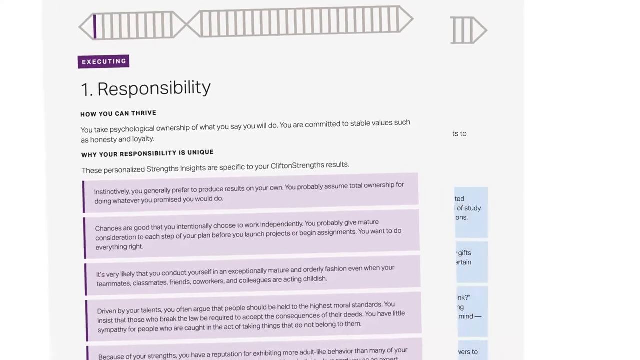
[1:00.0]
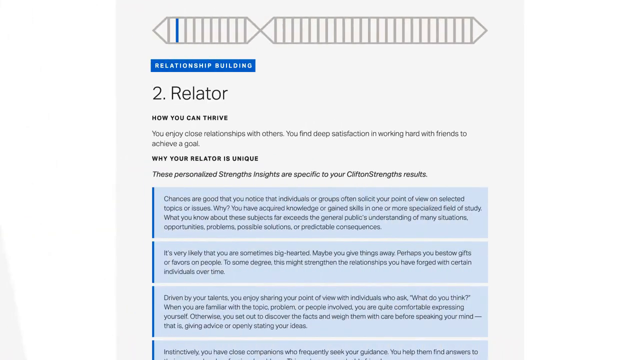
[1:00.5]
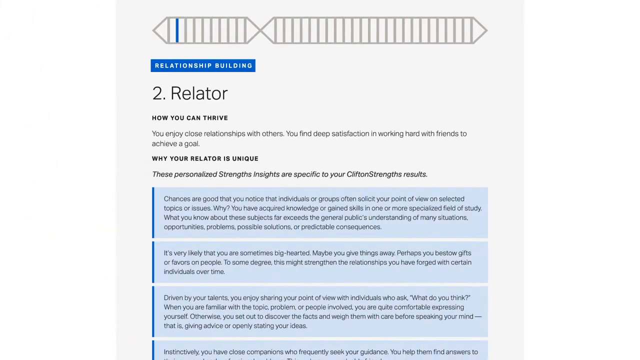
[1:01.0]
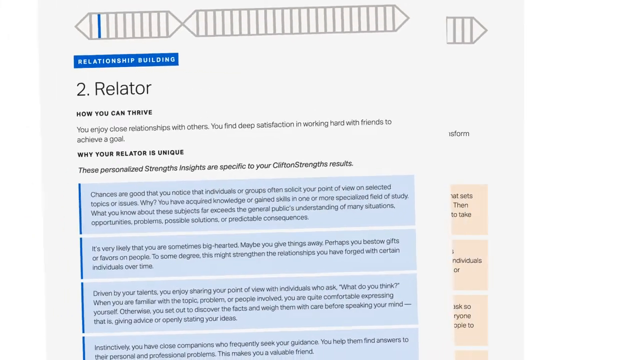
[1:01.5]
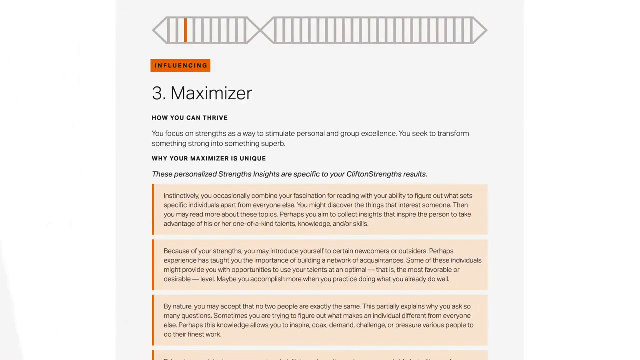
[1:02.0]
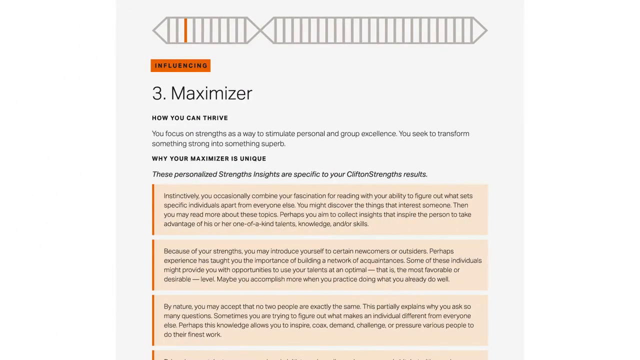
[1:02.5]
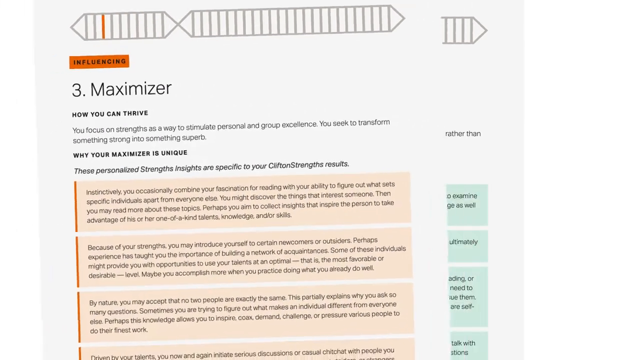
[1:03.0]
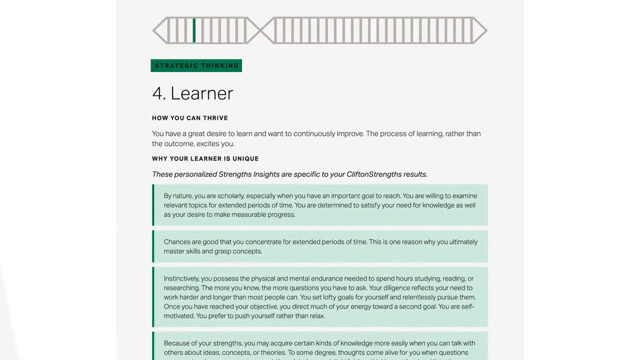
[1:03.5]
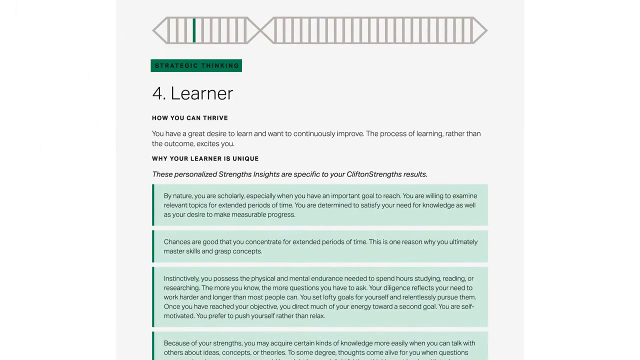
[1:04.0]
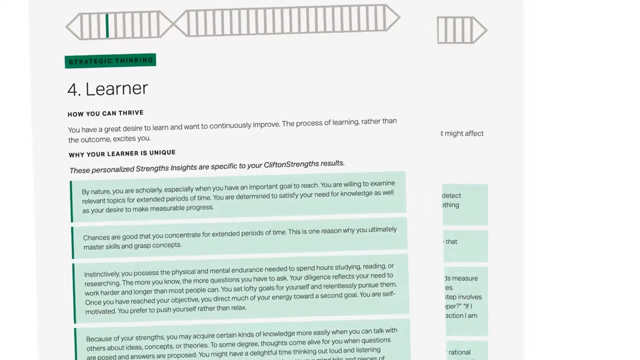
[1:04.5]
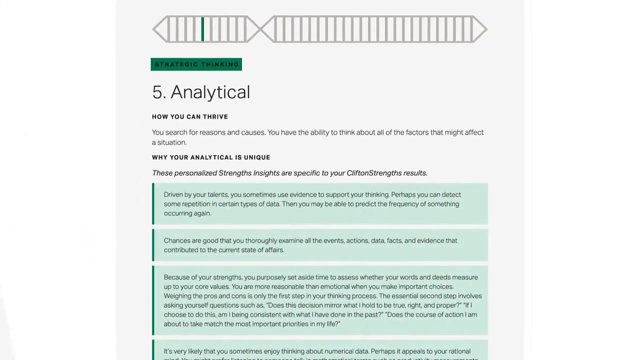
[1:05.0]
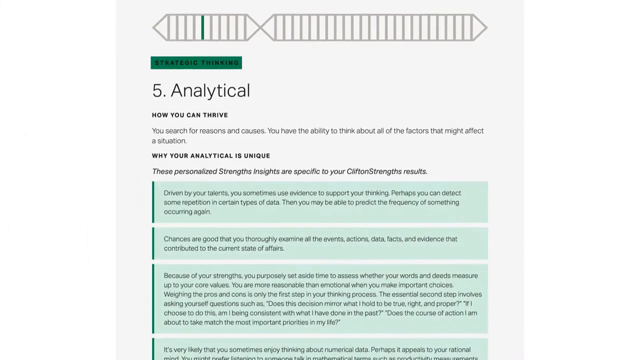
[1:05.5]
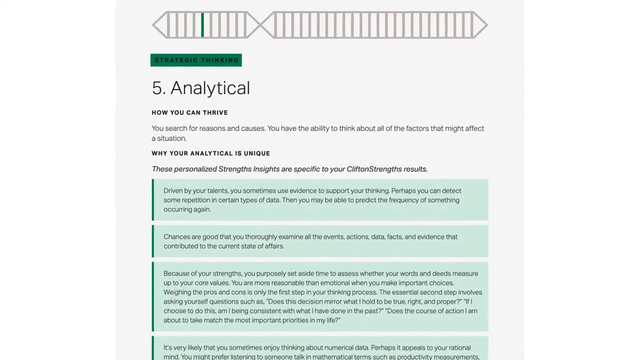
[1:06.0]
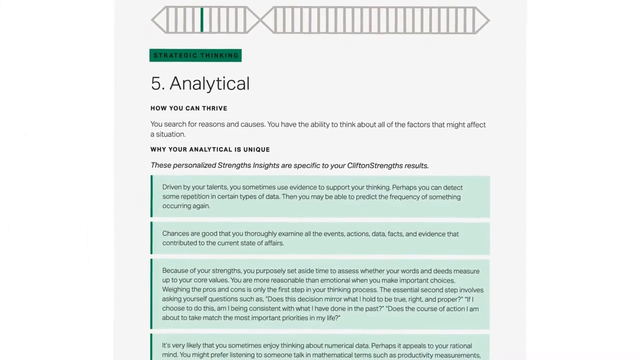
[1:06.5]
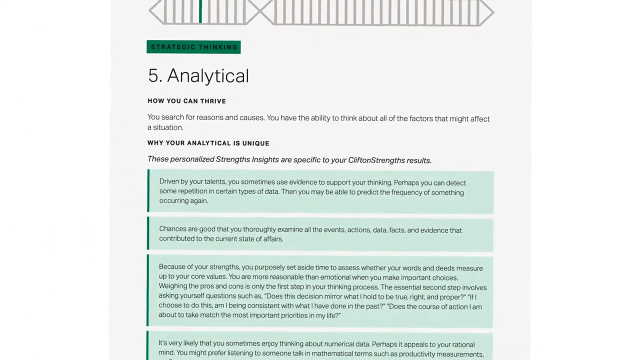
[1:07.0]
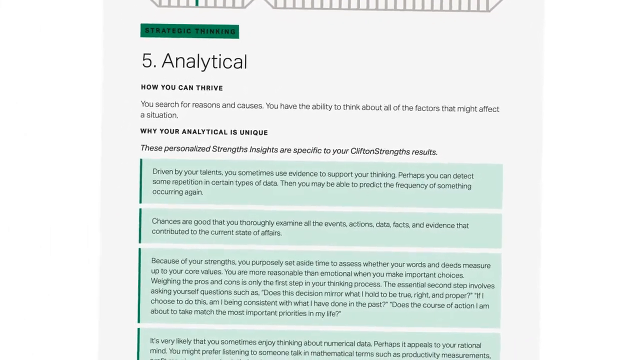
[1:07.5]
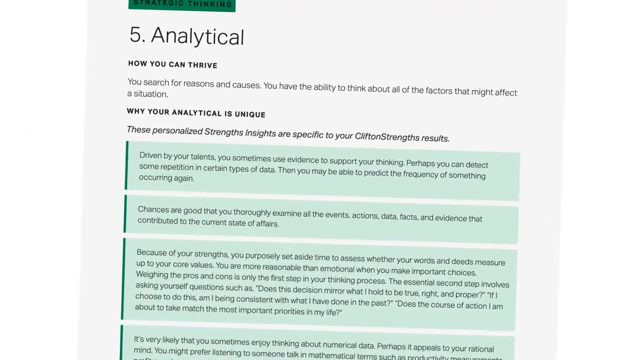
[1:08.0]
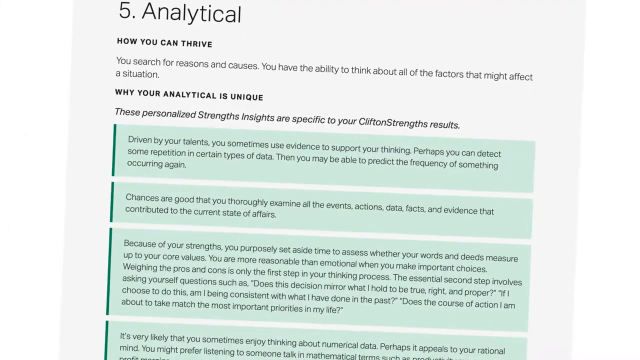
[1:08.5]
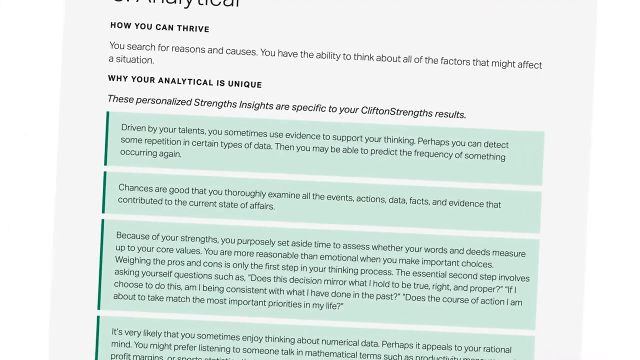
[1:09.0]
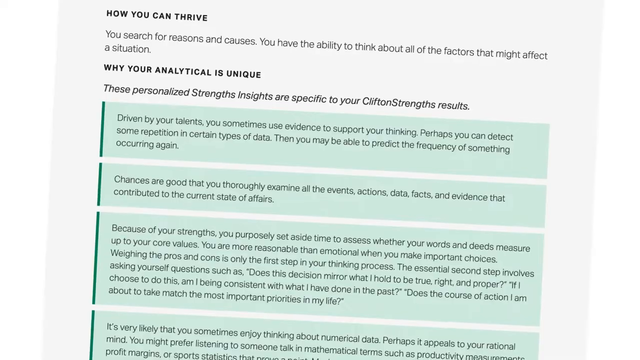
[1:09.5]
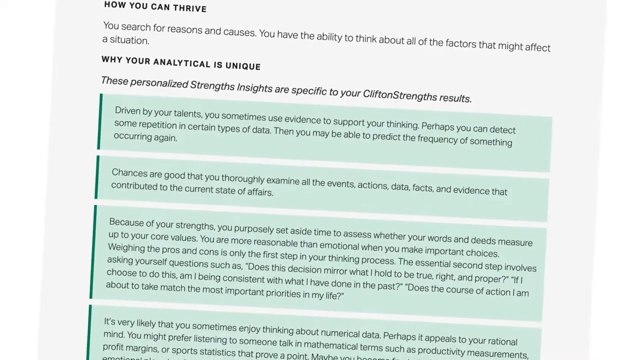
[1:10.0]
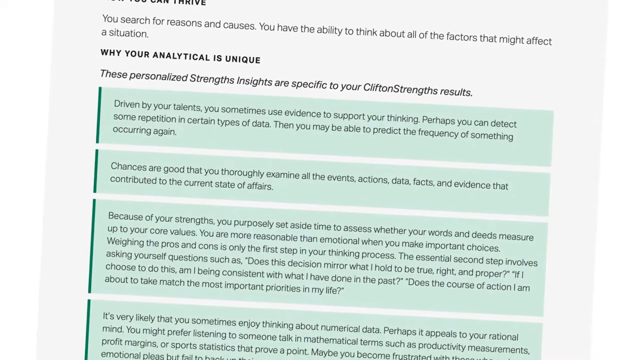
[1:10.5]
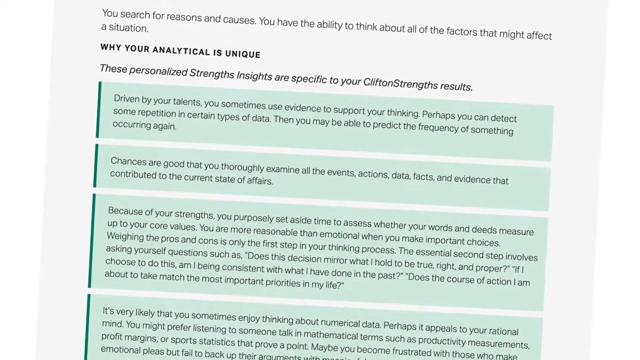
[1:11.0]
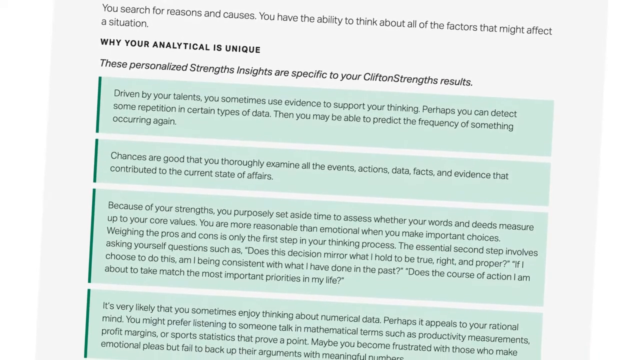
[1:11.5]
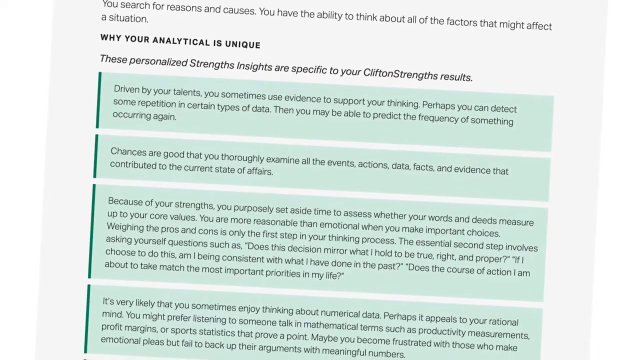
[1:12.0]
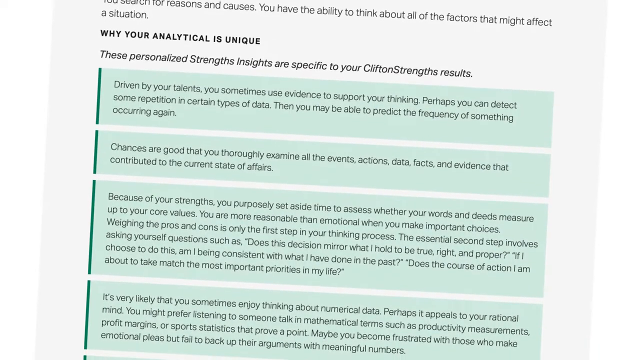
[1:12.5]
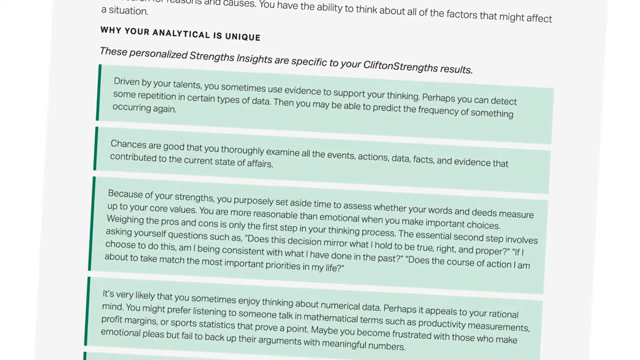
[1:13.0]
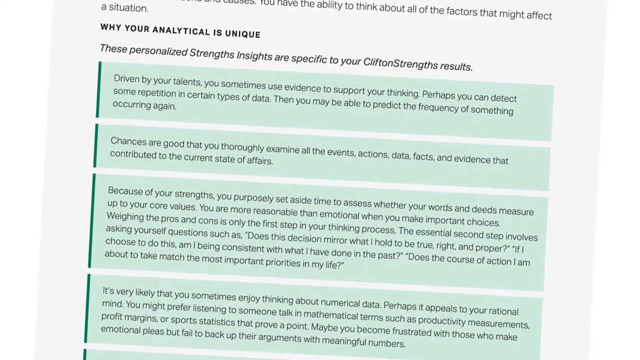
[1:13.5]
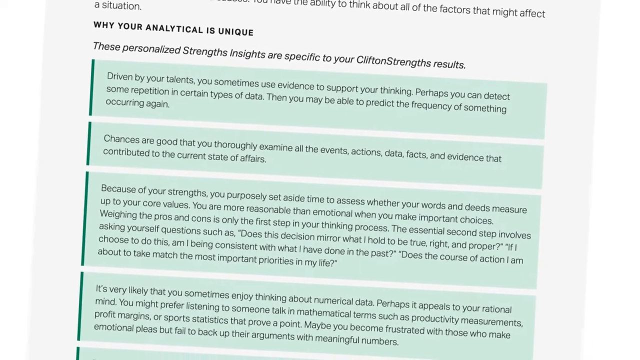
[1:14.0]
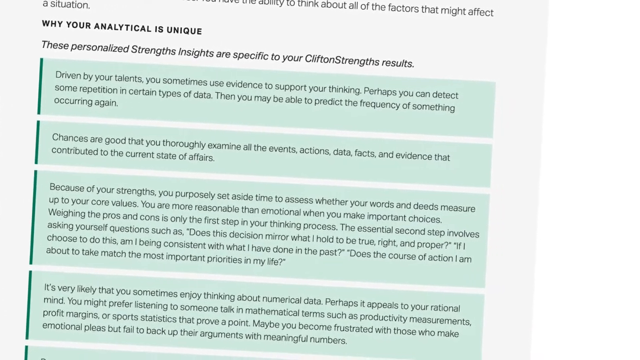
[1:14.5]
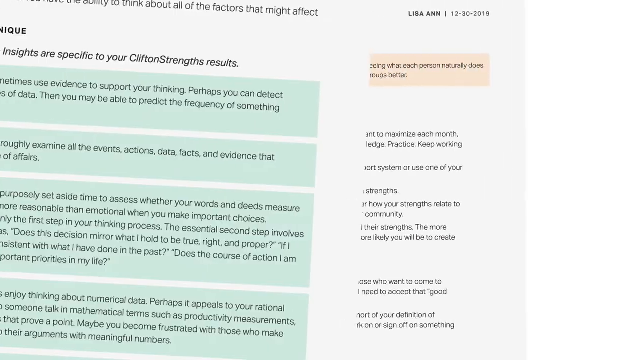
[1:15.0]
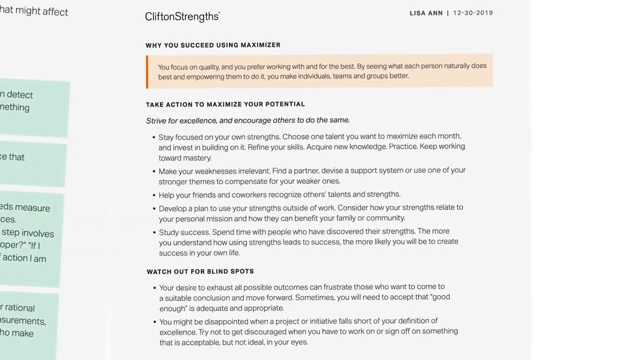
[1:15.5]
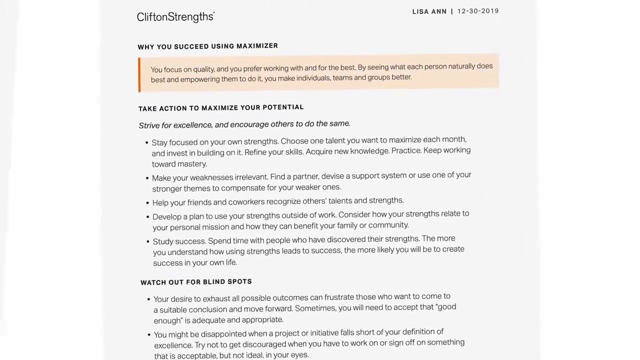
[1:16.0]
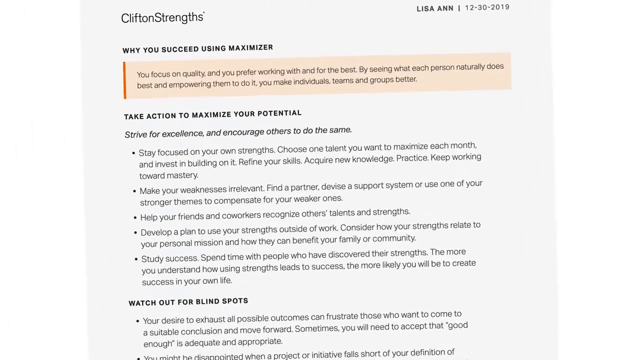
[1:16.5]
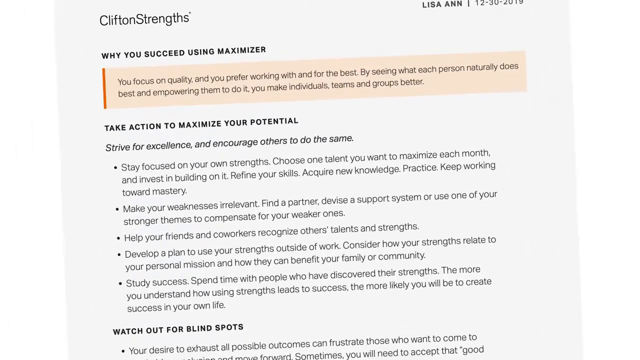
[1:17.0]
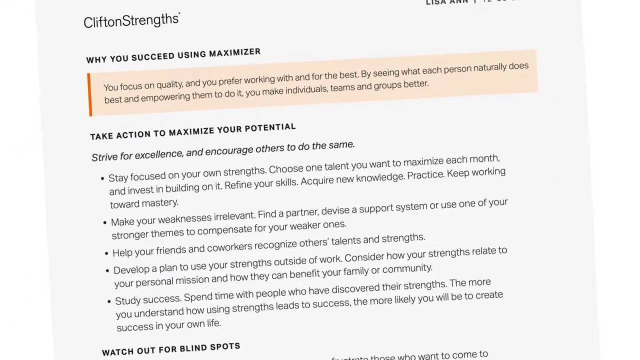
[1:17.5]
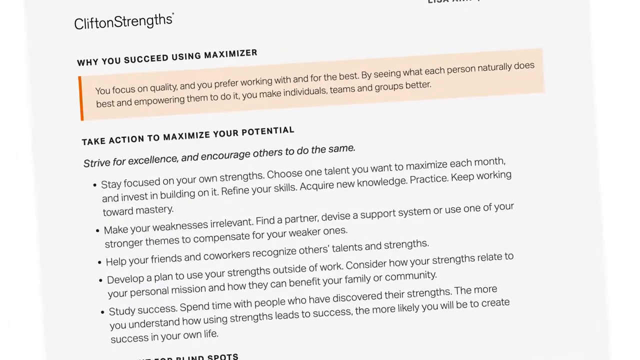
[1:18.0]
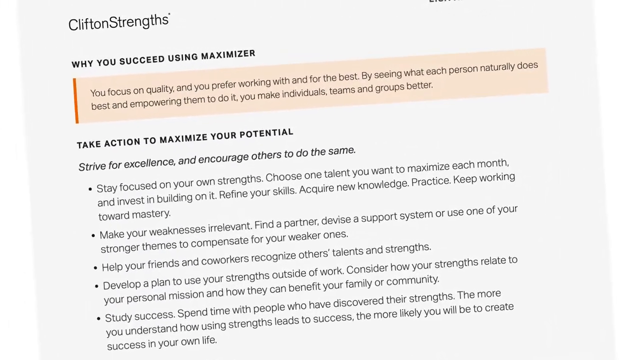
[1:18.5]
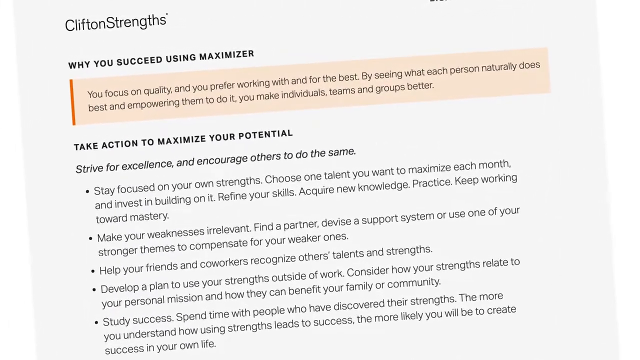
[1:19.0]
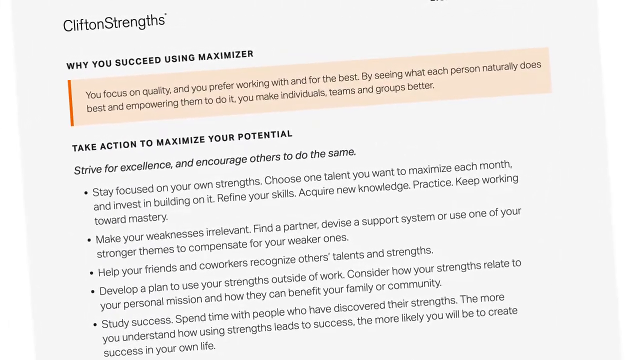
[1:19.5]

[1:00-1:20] Pages describing more of the different traits are shown. The first covers the learner, listing different aspects of that trait, and the next covers analytical, highlighting ideas about that kind of person and how they can thrive. A page then shows "why you succeed using maximizer". The screen gets blurry at some points, making it hard to make out what is going on.